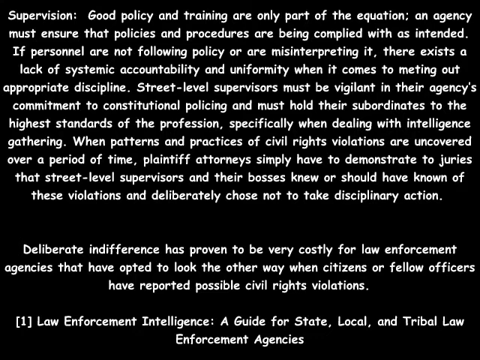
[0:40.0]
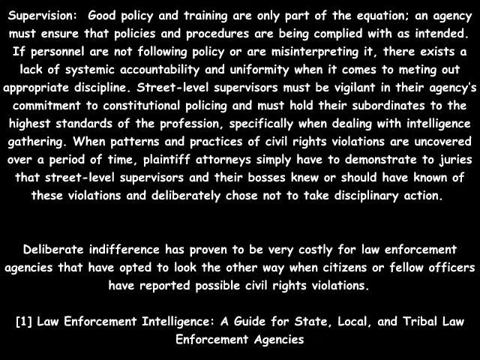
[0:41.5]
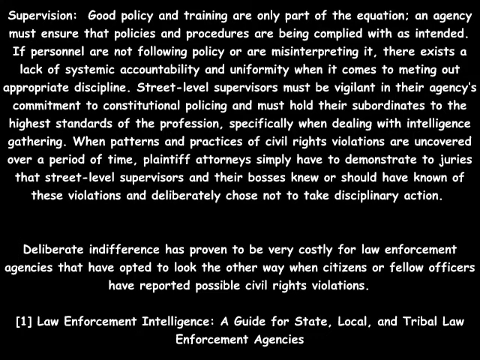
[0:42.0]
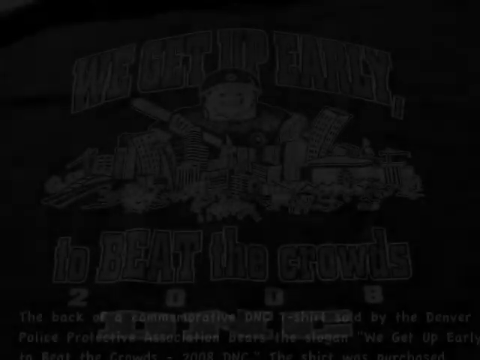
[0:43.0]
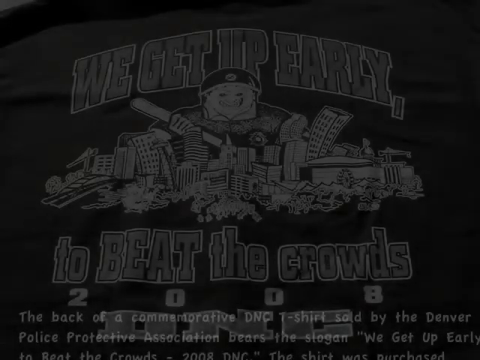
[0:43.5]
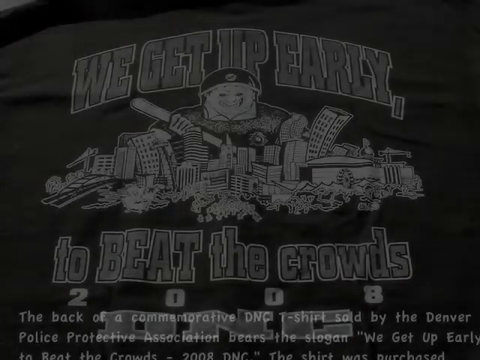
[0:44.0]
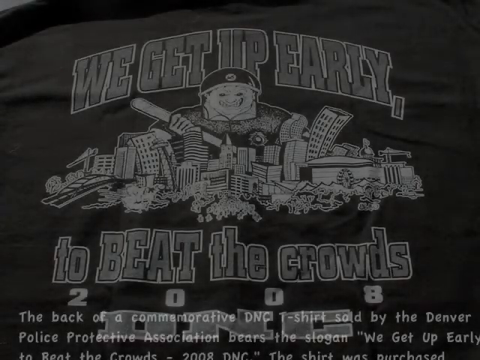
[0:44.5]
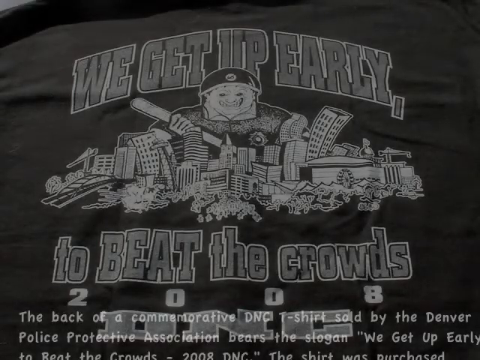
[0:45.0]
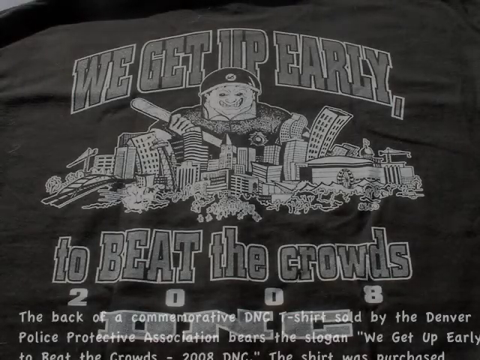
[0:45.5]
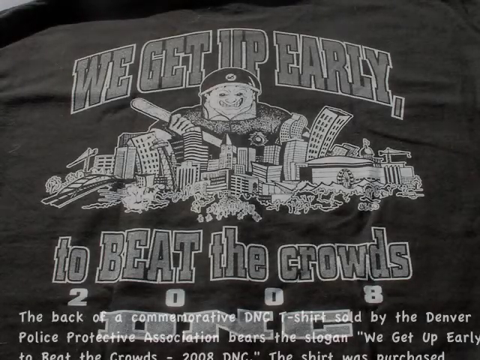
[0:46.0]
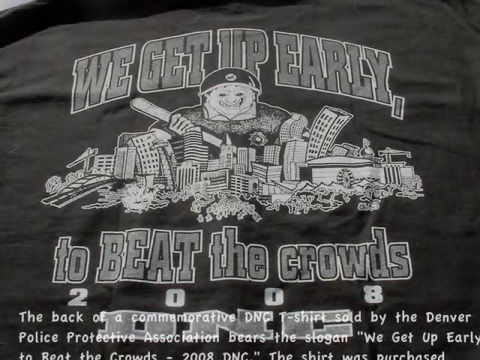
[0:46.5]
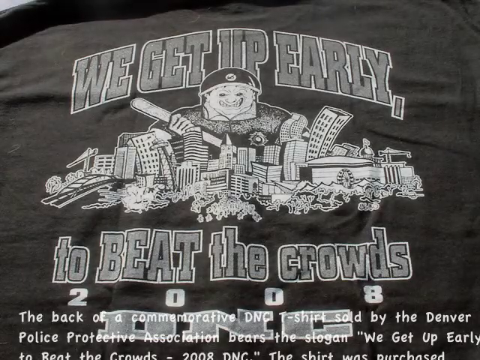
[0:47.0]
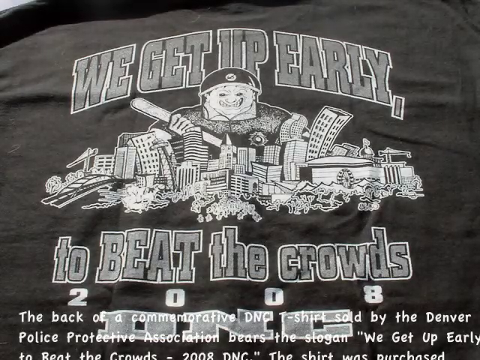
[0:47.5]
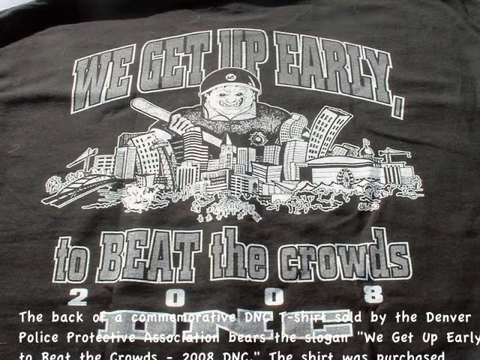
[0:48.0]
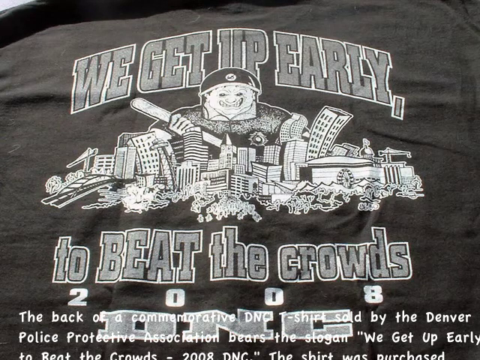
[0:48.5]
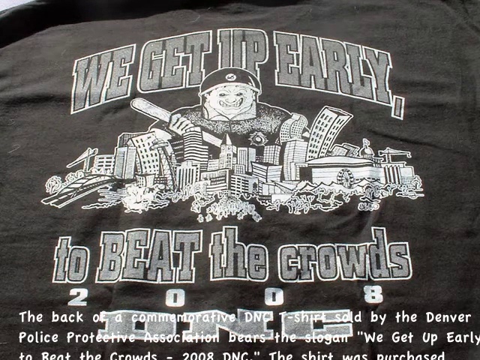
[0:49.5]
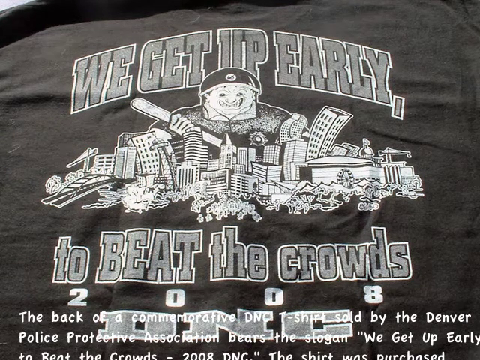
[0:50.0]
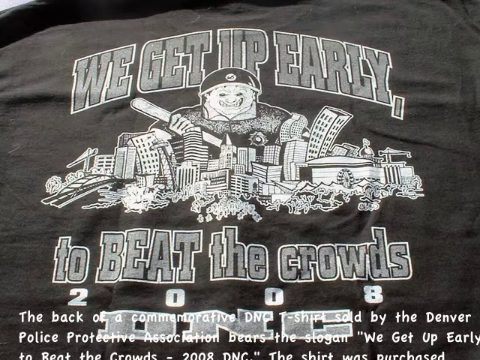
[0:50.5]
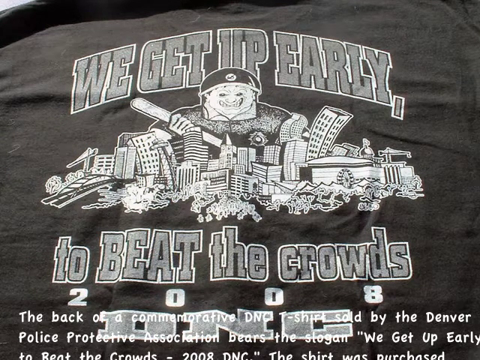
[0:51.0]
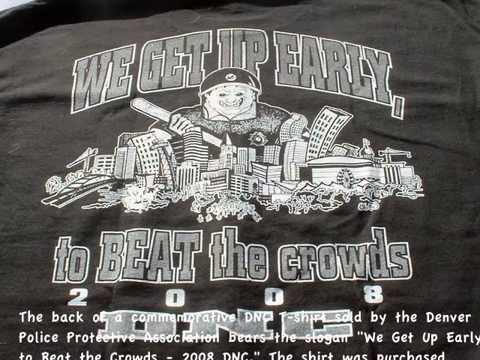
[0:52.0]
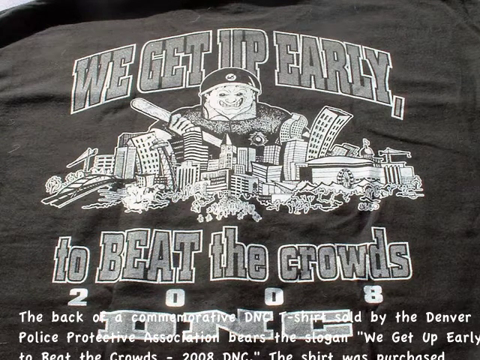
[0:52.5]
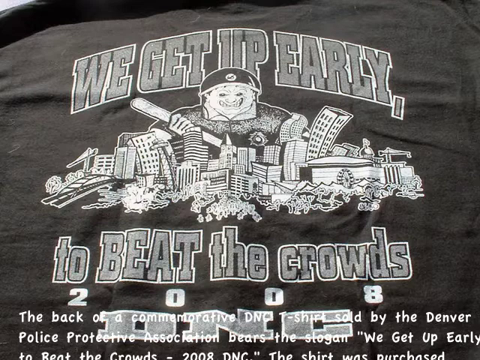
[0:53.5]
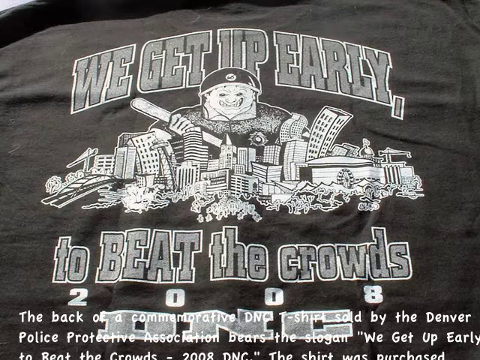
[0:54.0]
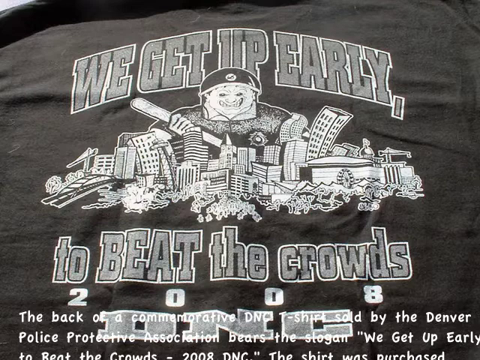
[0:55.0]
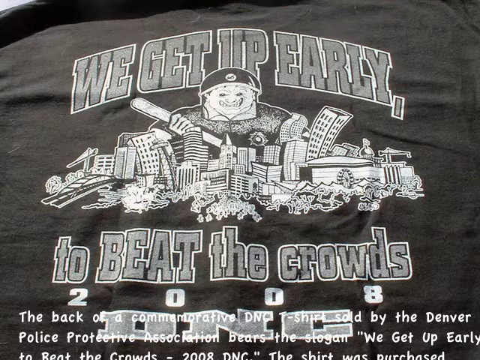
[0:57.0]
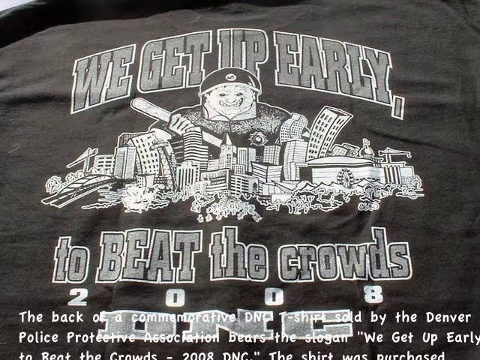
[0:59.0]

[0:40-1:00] Text continues describing supervision, stating that if personnel are not following policy or are misinterpreting it, there is a lack of systematic accountability and uniformity in meting out appropriate discipline, and that street-level supervisors must hold their subordinates to higher standards of the profession, especially in intelligence gathering. It states that if patterns and practices of civil rights violations are uncovered over time, a plaintiff's attorneys only need to show juries that street-level supervisors and their bosses knew or should have known of the violations but deliberately failed to take the needed disciplinary action. It further states that deliberate indifference, looking the other way when citizens or fellow officers fail to report civil rights violations, is costly for law enforcement agencies. The video then shows the back of a commemorative t-shirt that reads, in capital letters, "We Get Up Early", with "to BEAT the crowds" at the bottom of the shirt. The shirt shows a ghoulish-looking character holding a baseball bat amid a caricature of a city whose buildings are in shambles or bending as if about to fall over.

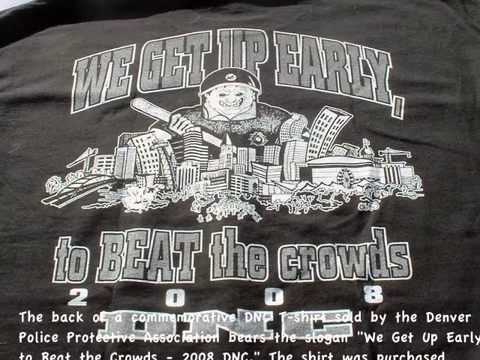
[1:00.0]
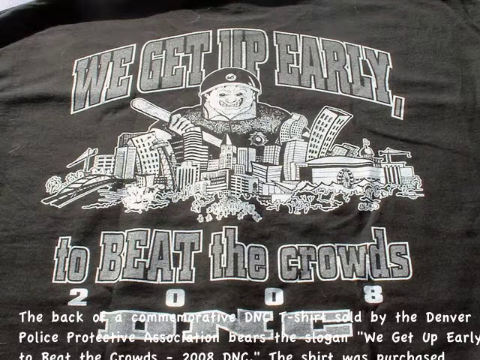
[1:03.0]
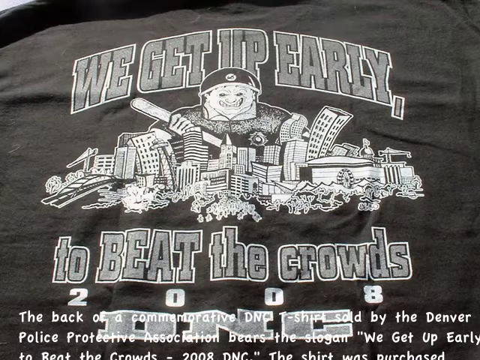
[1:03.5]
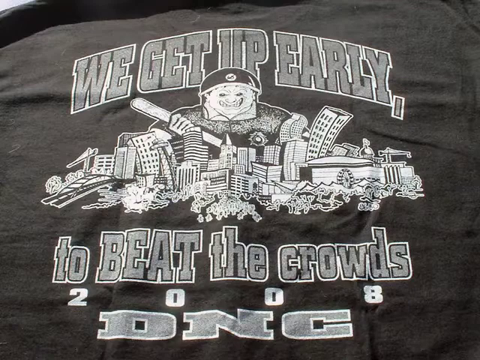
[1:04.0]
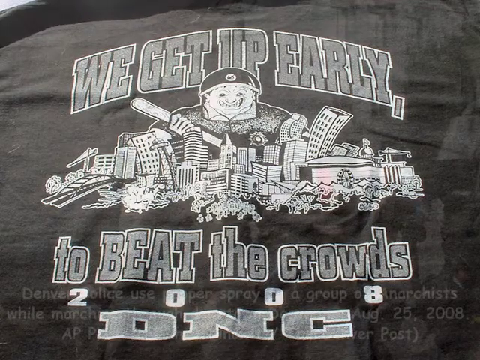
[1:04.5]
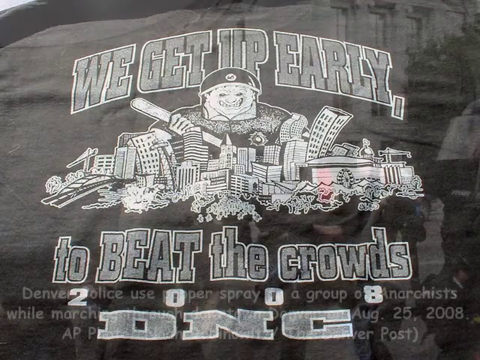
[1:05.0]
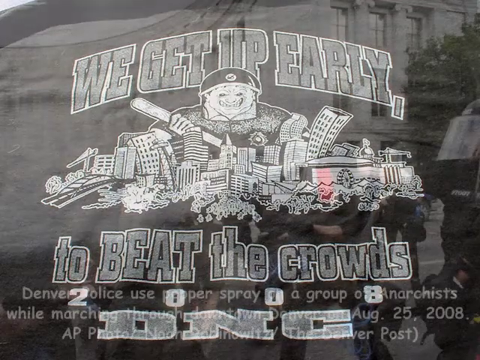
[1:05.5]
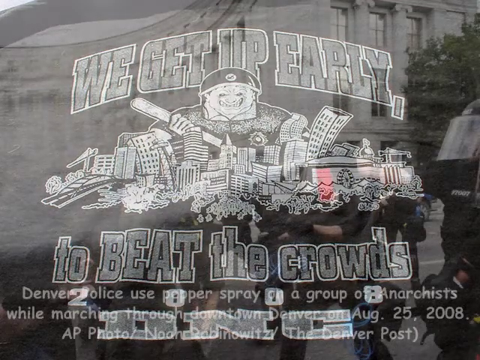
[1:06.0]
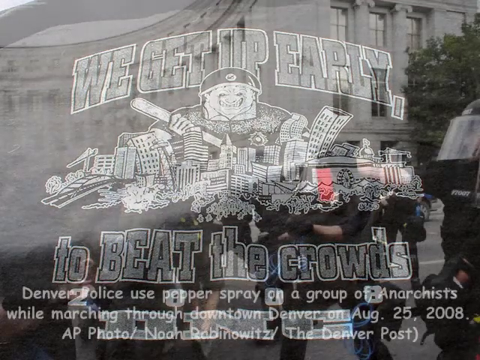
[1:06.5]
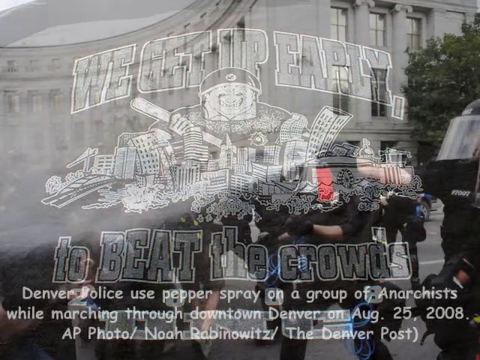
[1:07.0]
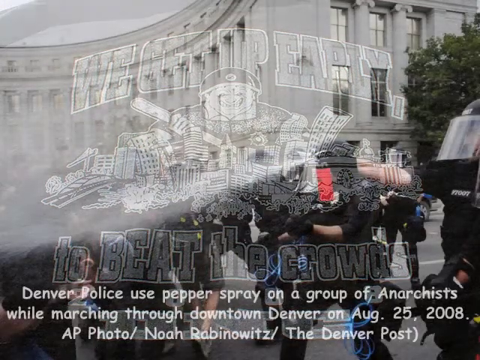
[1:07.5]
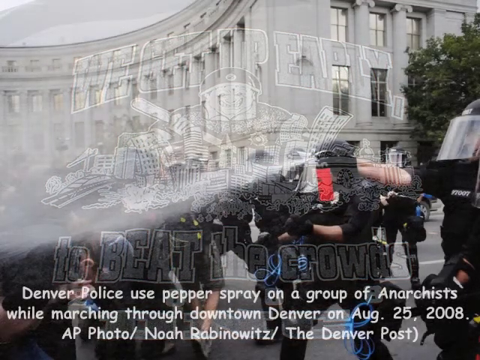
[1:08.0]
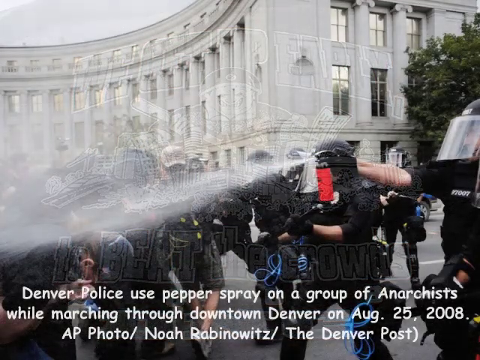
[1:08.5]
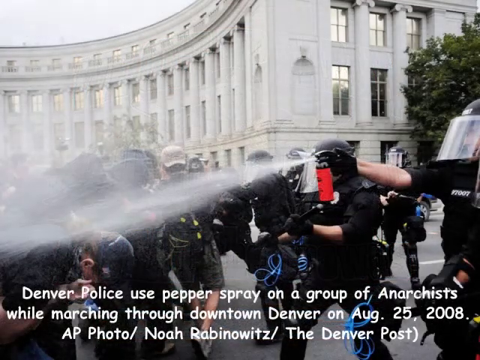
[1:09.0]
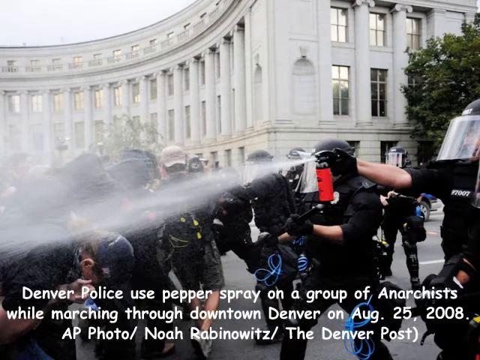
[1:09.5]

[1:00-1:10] The t-shirt is shown, with capital letters at the bottom that appear to be "DNC". The text on the shirt reads "We get up early, to beat the crowds". A fiendish-looking character with a badge holds a baseball bat and a helmet, surrounded by what appears to be a destroyed city. The next image is a still scene of police pepper spraying a crowd in Denver. The caption describes Denver police using pepper spray on a group of anarchists marching through downtown Denver on August 25th, 2008.